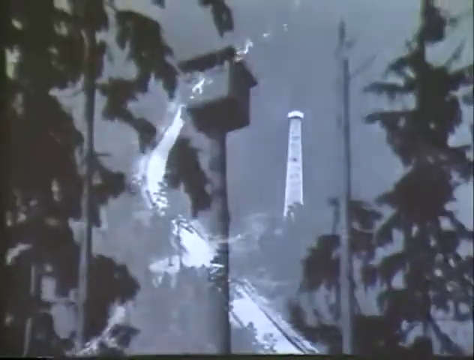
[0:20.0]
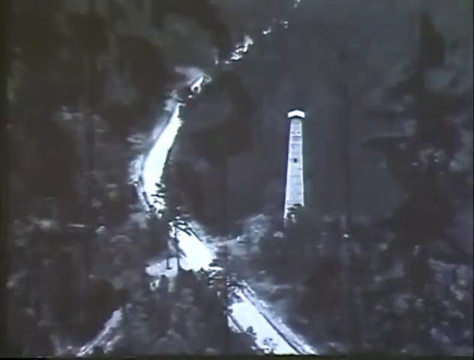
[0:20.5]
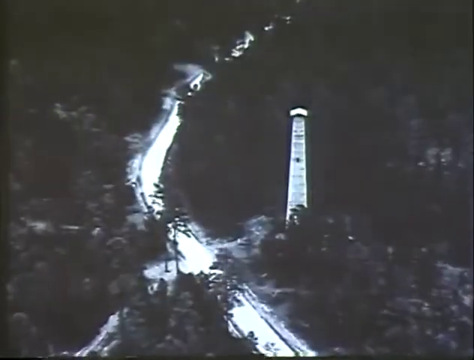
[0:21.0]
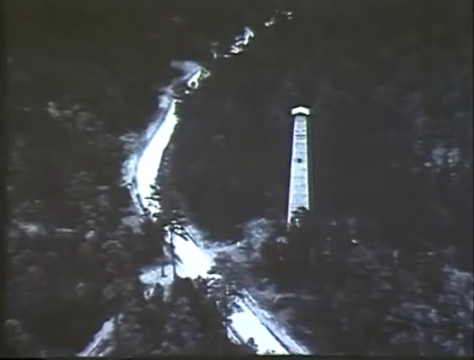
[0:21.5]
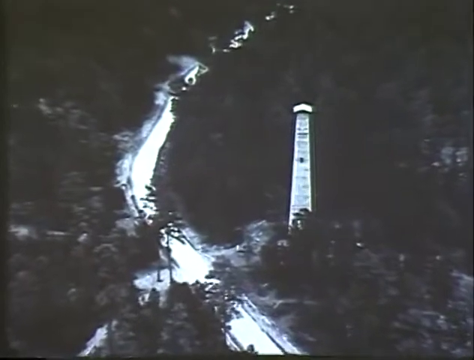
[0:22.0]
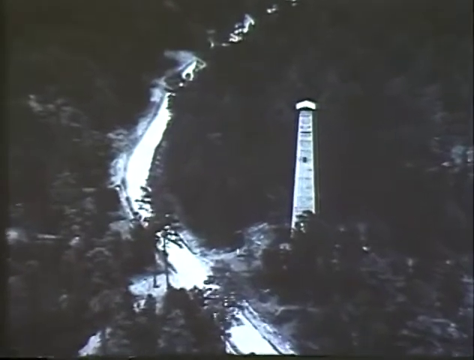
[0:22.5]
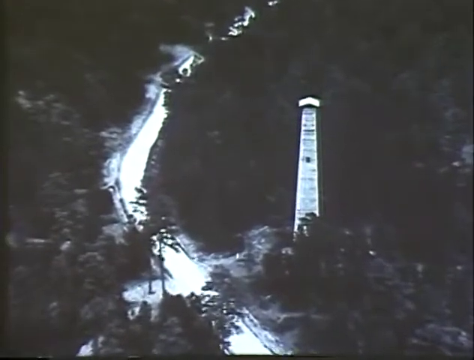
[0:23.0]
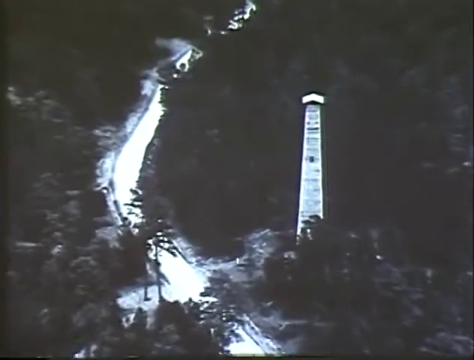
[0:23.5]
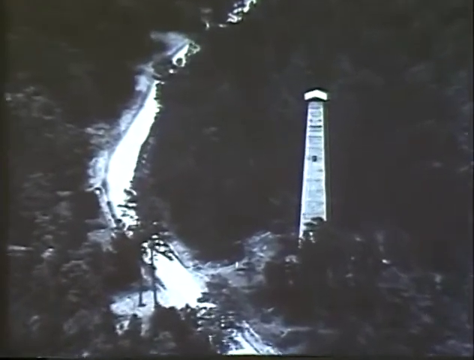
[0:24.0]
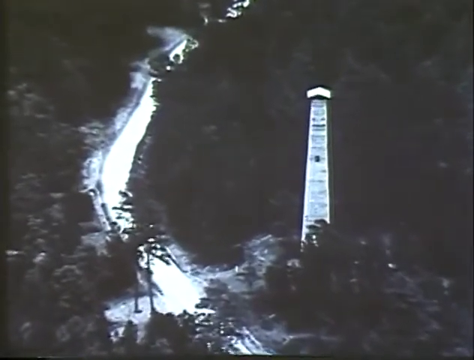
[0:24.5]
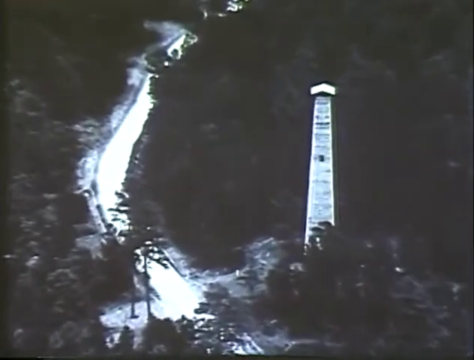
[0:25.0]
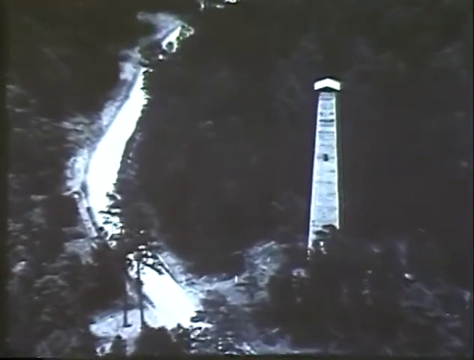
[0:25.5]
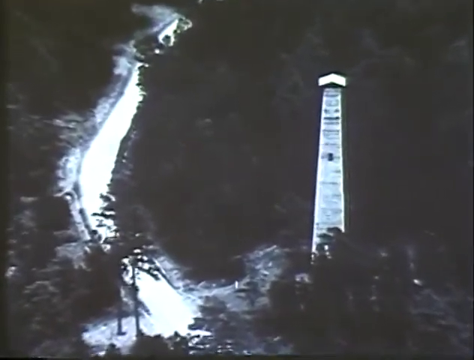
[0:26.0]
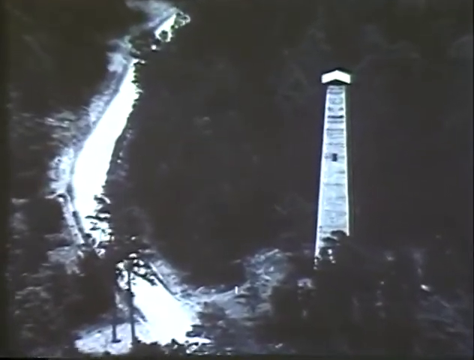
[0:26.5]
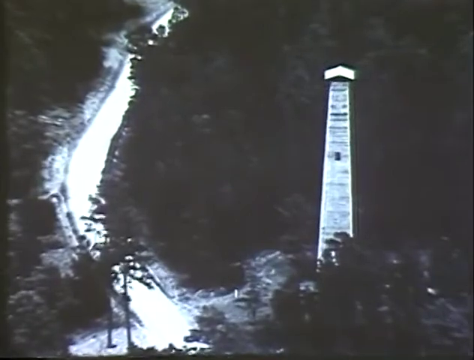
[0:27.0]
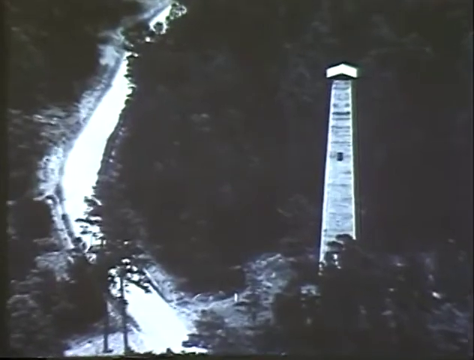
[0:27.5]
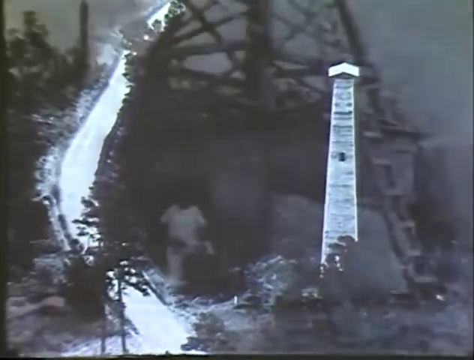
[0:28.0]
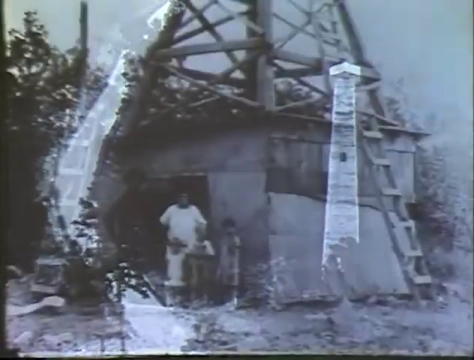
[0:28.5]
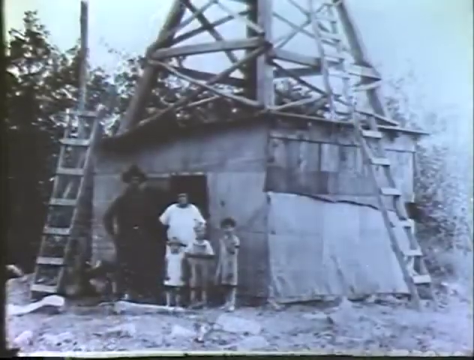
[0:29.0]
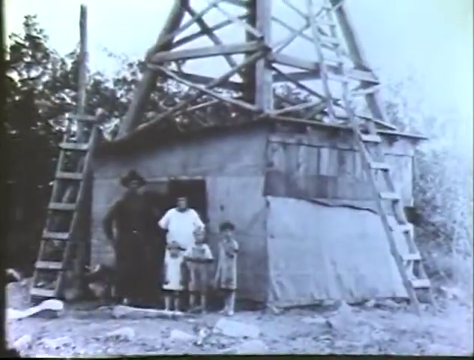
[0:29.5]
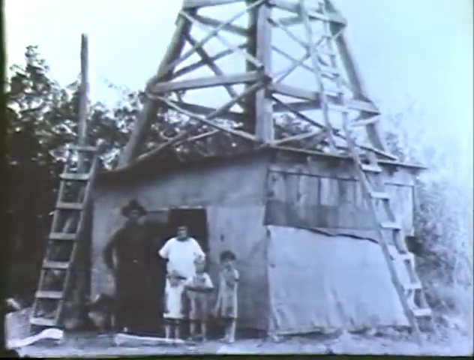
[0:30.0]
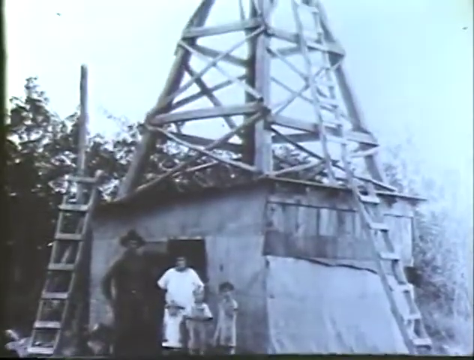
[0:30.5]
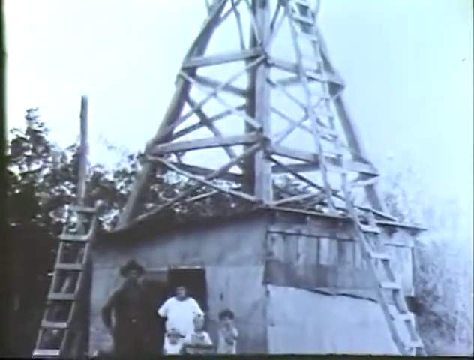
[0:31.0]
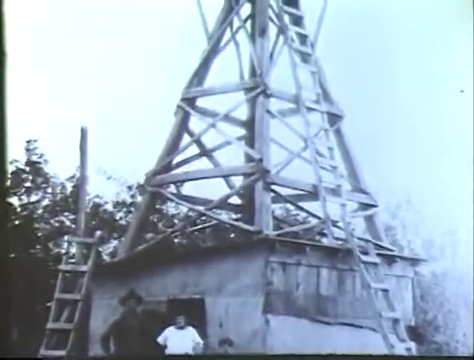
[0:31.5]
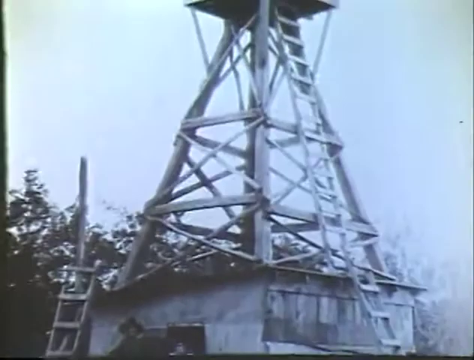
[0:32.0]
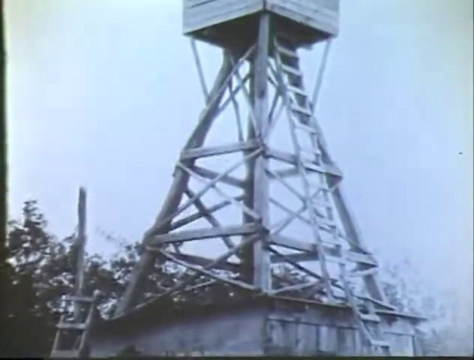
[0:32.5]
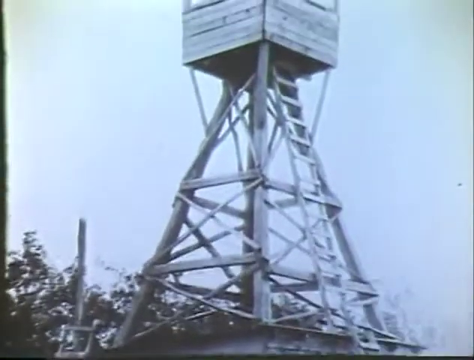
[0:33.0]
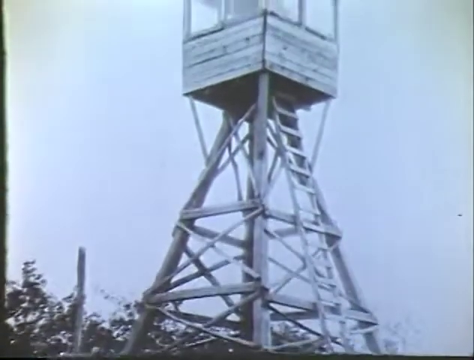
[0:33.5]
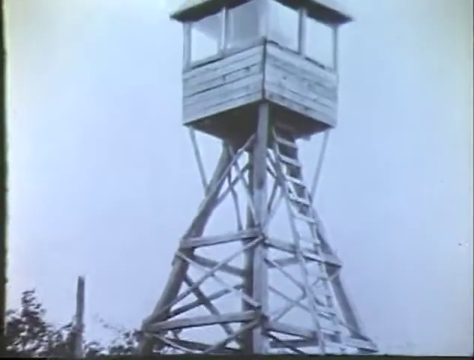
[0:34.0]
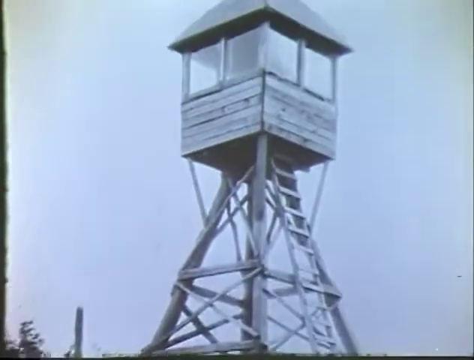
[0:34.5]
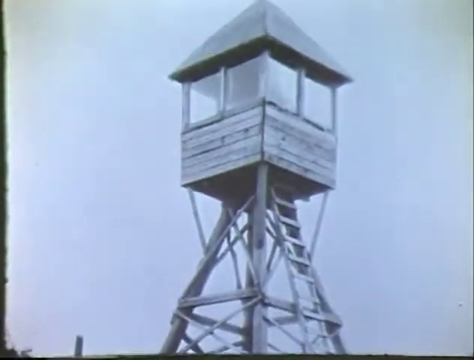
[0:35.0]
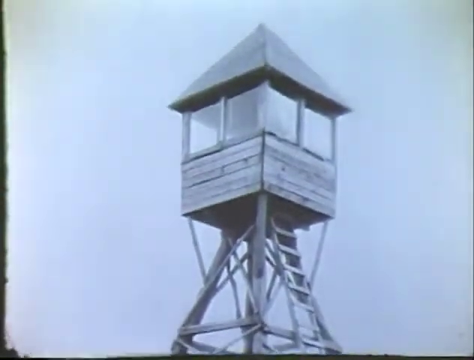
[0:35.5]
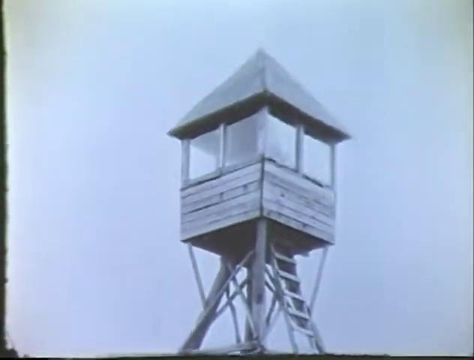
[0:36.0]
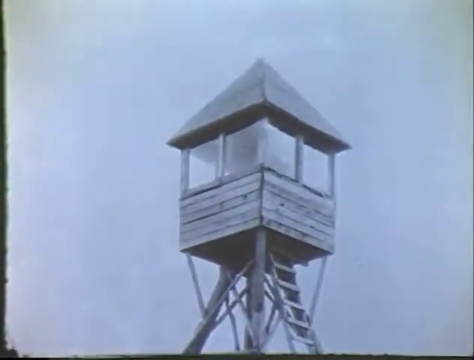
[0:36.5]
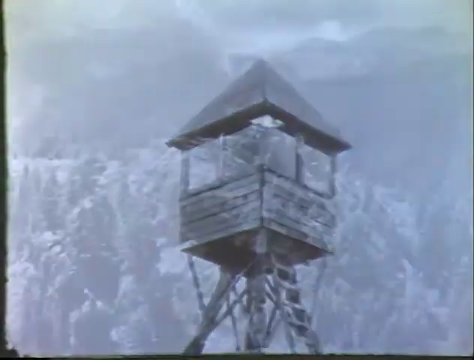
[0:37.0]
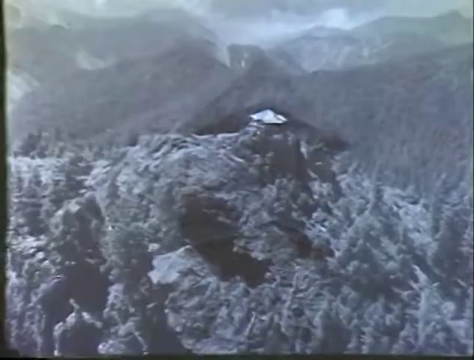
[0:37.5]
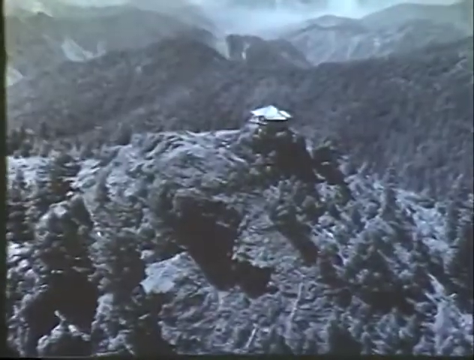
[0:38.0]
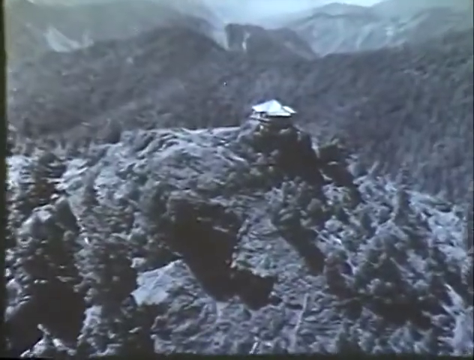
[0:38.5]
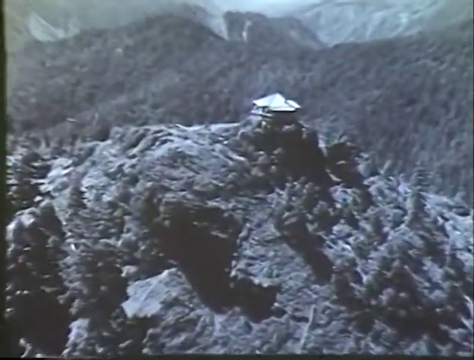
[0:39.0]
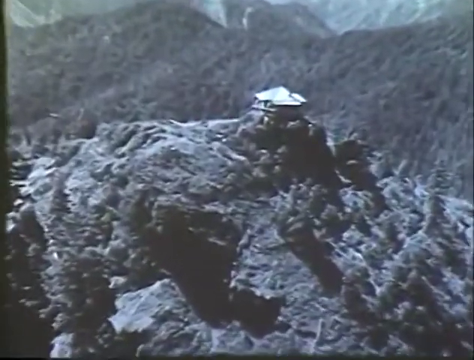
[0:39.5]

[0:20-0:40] In black and white, an aerial view shows a densely forested area, with dark trees on both sides of the image. Through the center, slightly to the left, runs a long curving area that looks like a roadway or a river; it is brightly lit and shines white against the black of the trees, and some of the trees are illuminated in its glow. To the right of it, on the right of the screen, is a tall tower that tapers as it rises, with some sort of steps or windows in its side and a two-sided roof at the top that peaks slightly in the middle. The tower is also illuminated white against the black forest. There are no other features in the landscape besides the moving trees and the road-like area; no cars and no people are visible.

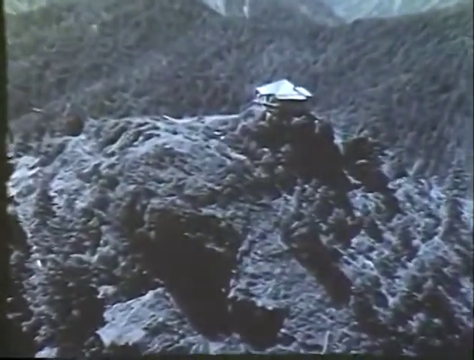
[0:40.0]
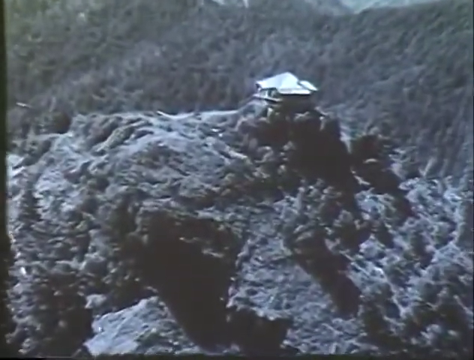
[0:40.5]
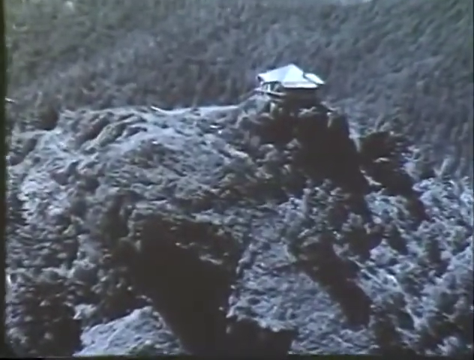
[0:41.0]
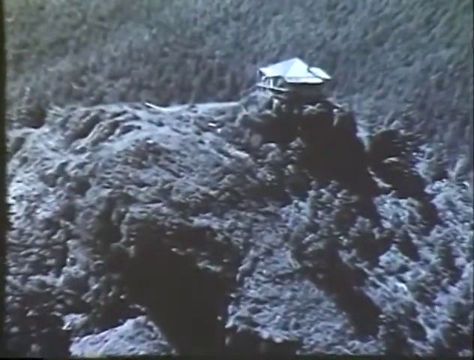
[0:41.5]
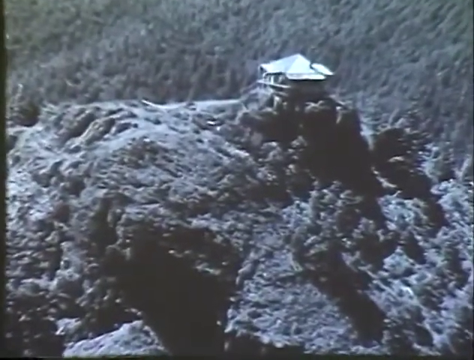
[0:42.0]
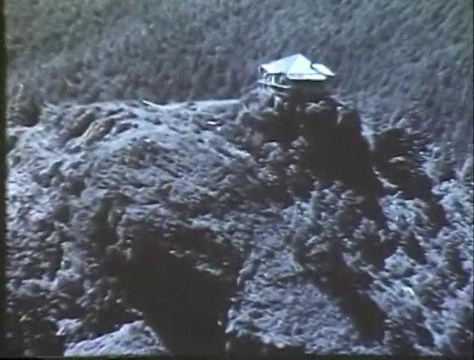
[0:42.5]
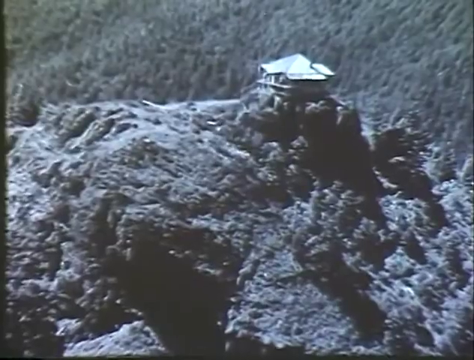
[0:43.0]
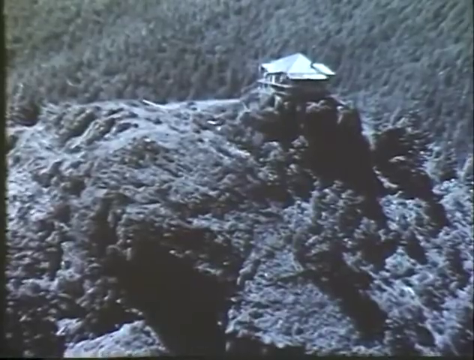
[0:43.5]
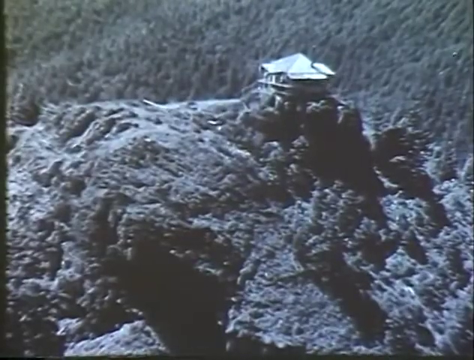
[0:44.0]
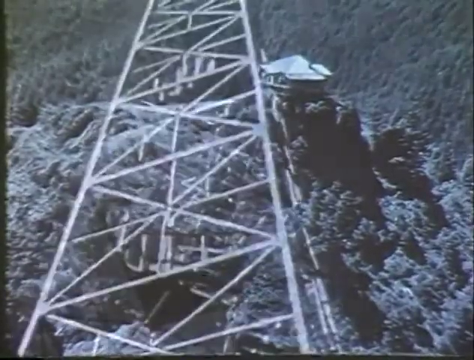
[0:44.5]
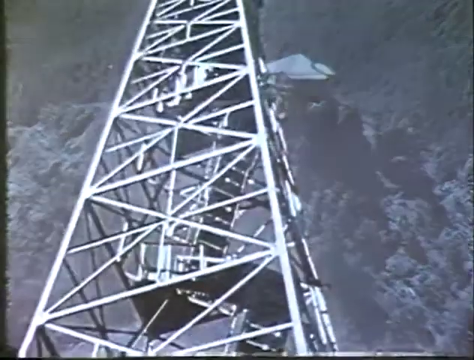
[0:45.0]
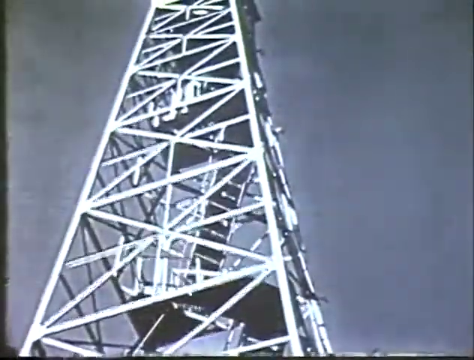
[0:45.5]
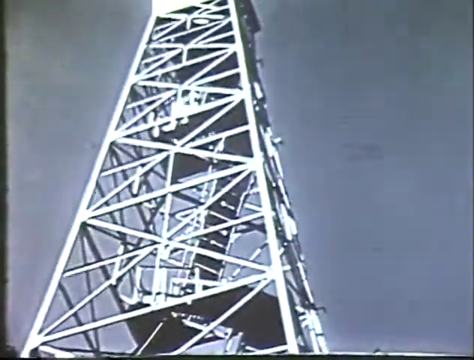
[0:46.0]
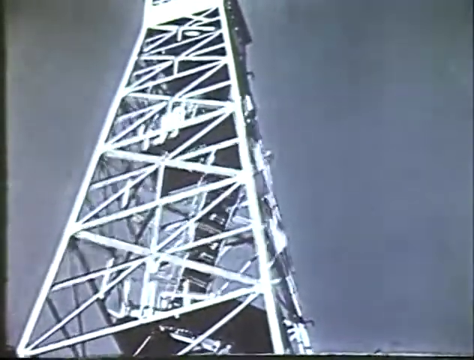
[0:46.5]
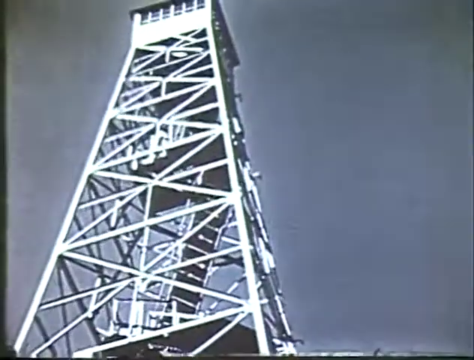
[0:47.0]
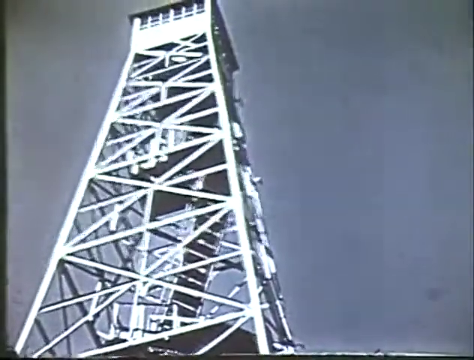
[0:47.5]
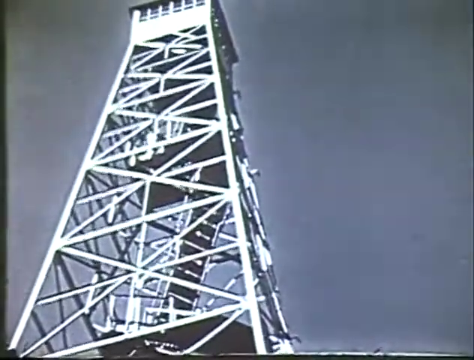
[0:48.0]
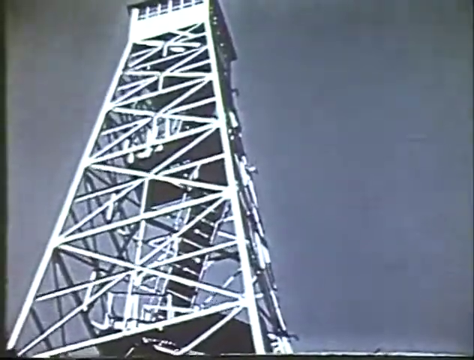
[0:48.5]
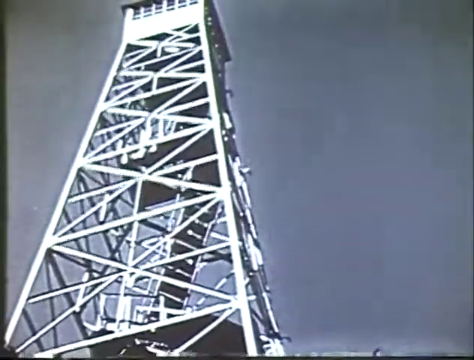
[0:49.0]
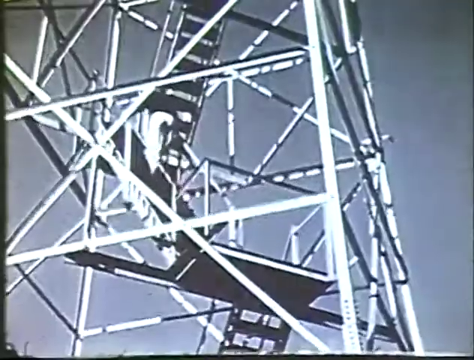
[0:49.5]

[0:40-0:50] Another aerial view shows a structure on top of a tall mountain that appears rocky at its top. The mountain falls away to a valley behind it, and beyond that more mountains rise. The structure looks like a home, has a peaked roof, and seems to be reflecting sunlight. The image then changes to a tall fire tower of metal grating stretching upward. At its top is a square fire observation gallery with six windows visible on the near side and what looks like a flat roof; windows appear to continue on the right side of the structure as it goes around. A man begins to climb up the center of the tower along a staircase built there and reaches a platform.